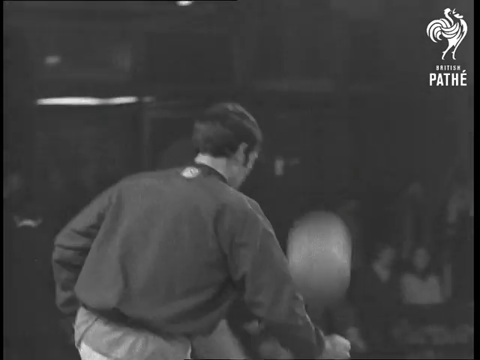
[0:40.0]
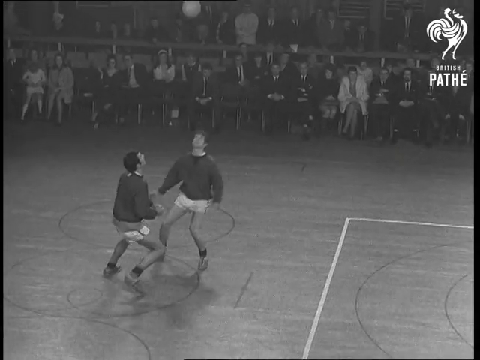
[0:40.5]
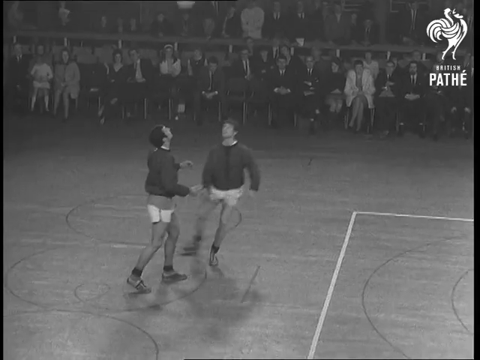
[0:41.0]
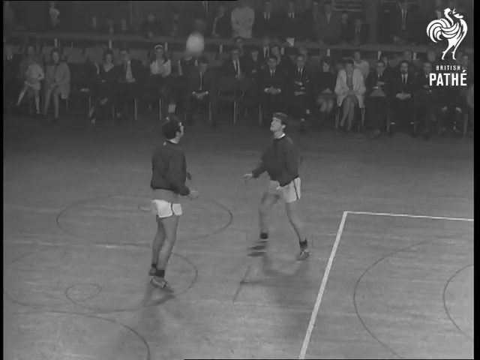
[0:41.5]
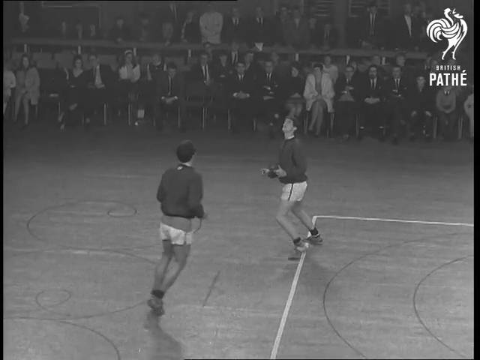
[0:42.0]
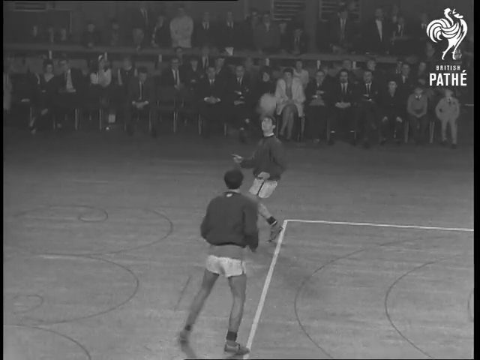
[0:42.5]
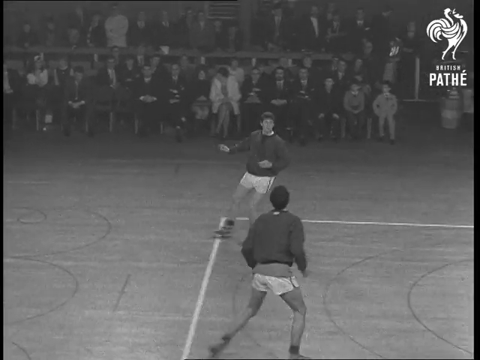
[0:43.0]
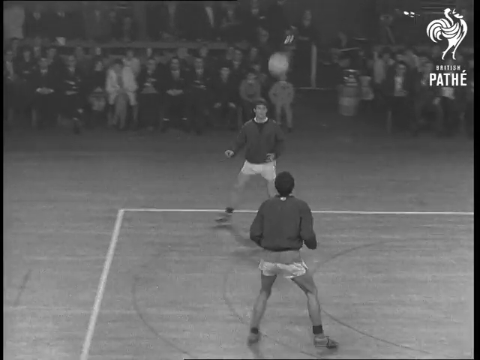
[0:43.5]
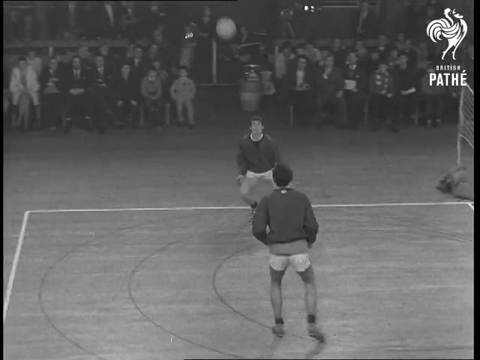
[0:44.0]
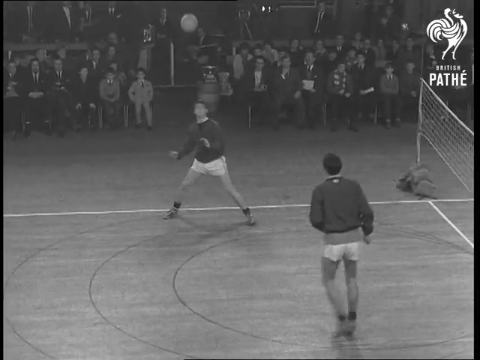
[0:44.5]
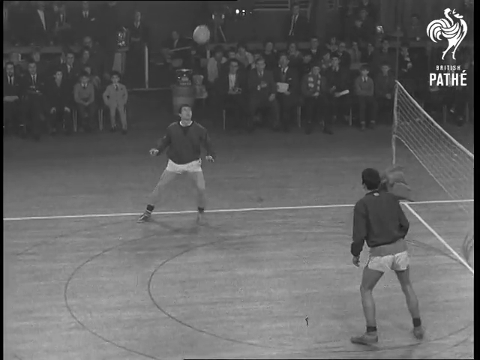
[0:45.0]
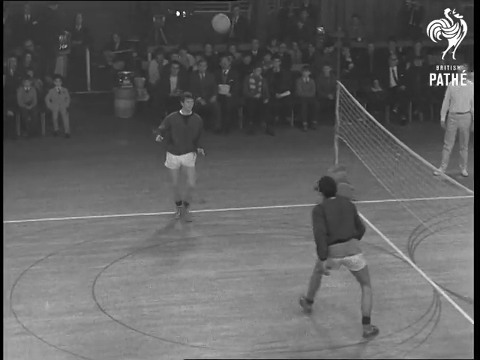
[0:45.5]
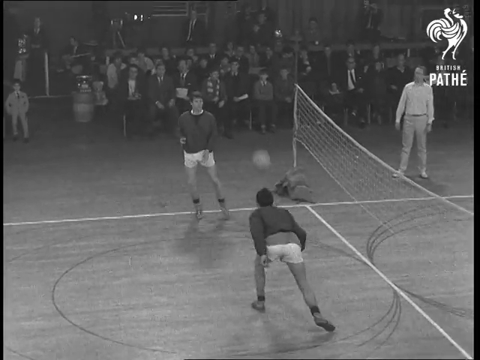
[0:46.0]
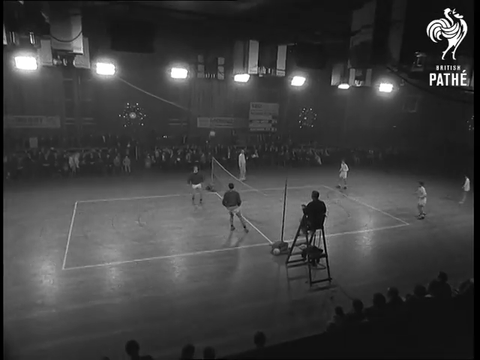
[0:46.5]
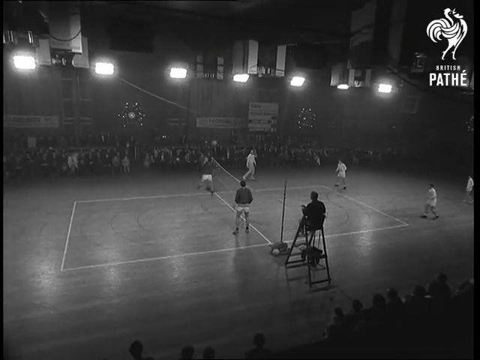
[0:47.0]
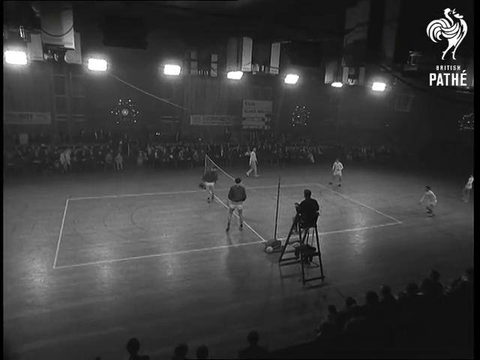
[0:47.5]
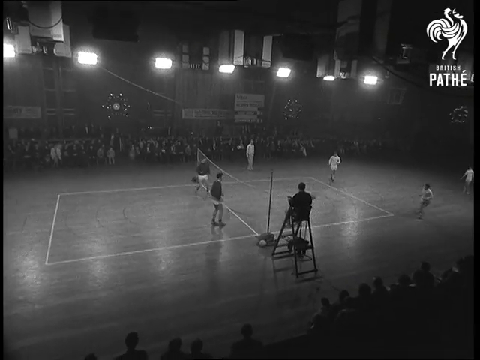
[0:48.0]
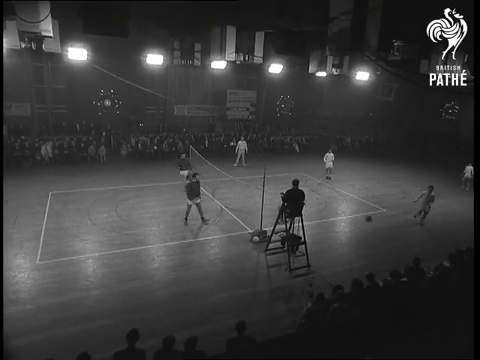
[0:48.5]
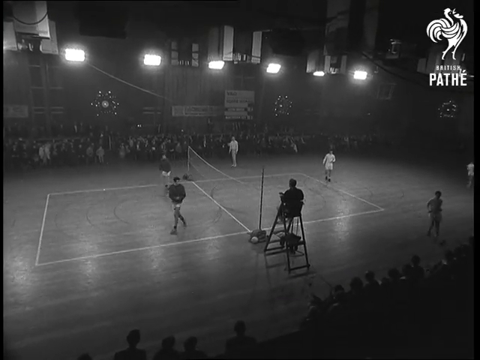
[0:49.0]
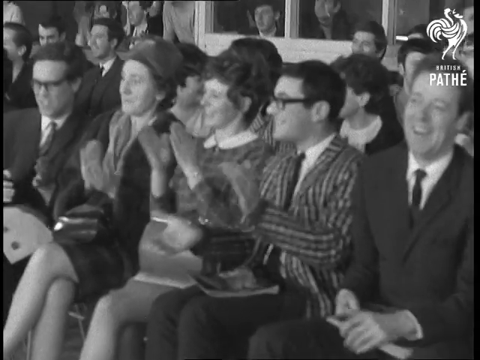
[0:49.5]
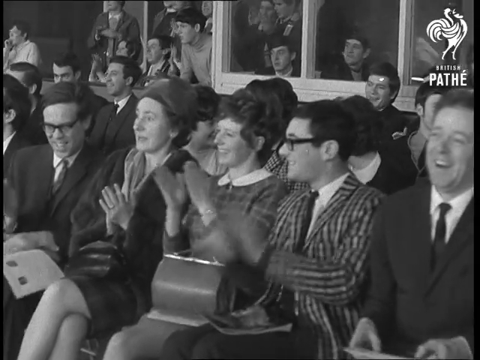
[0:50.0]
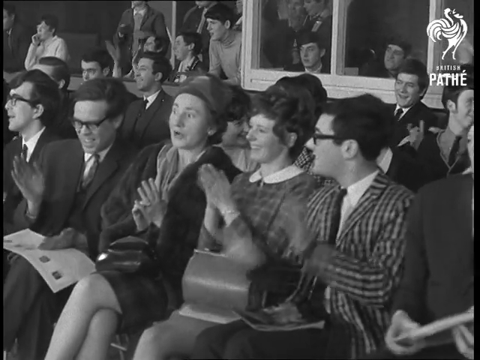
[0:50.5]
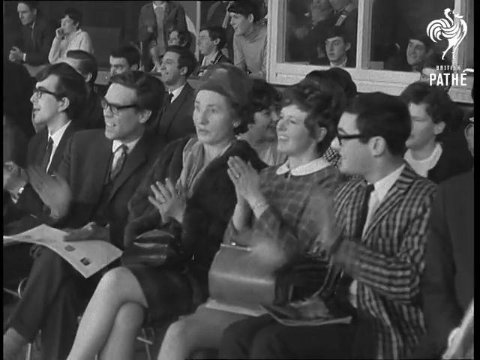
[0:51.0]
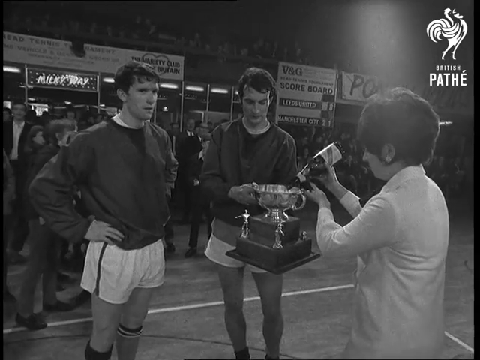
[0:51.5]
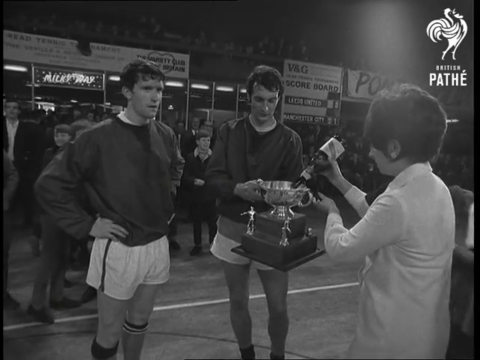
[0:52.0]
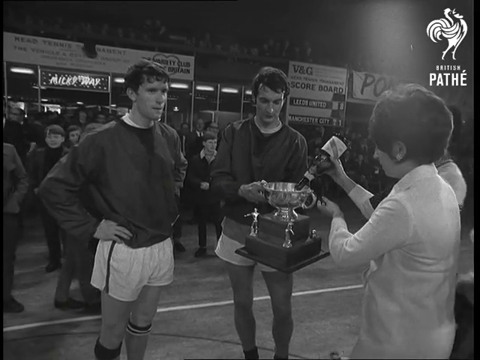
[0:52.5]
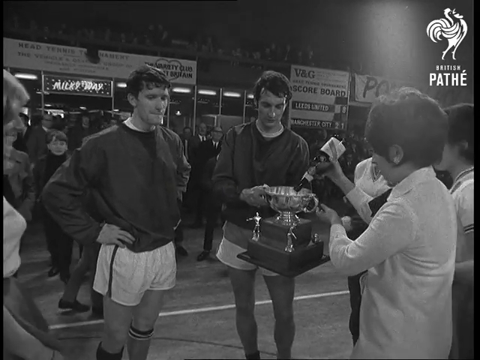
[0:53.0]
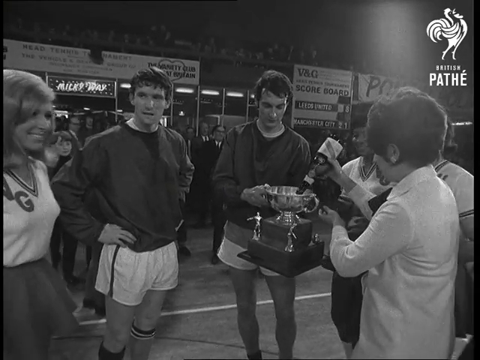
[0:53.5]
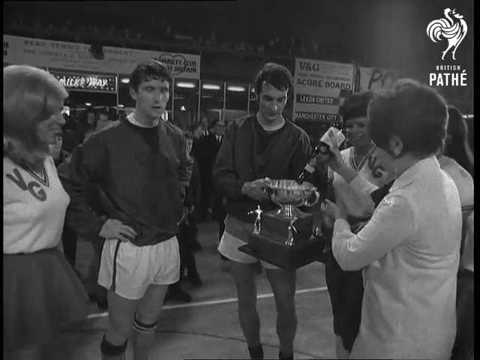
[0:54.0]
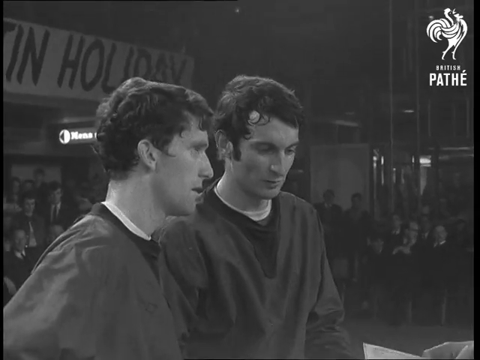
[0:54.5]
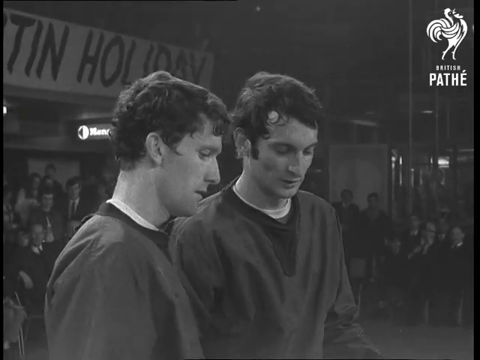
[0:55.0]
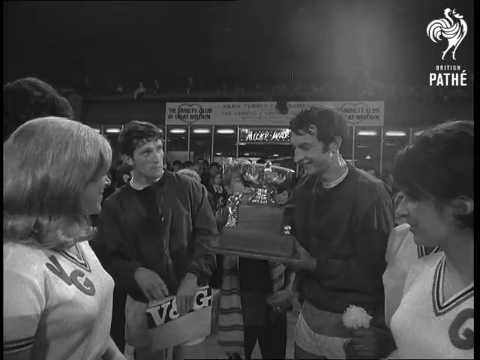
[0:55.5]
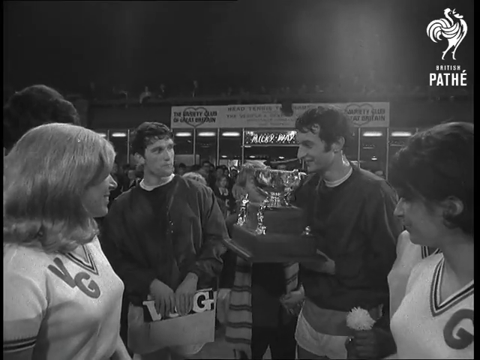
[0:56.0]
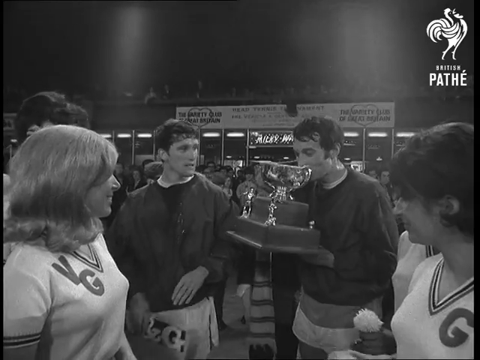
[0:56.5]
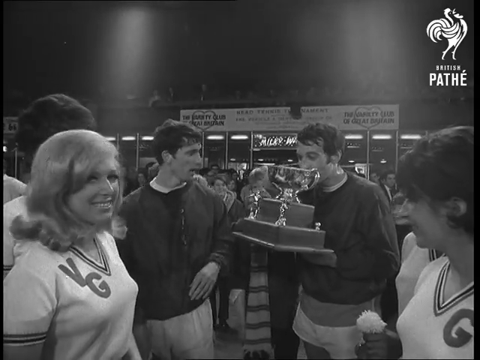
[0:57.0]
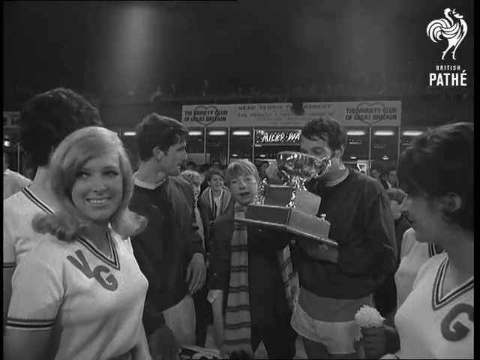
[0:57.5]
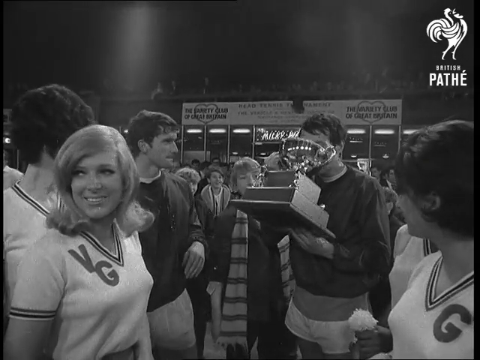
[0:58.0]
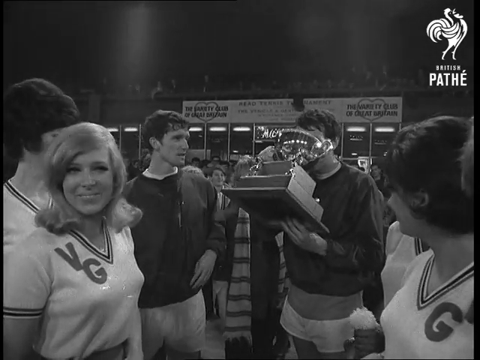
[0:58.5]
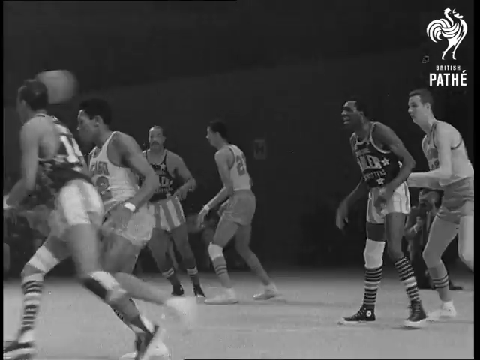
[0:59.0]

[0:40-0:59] A game almost like volleyball is being played in which the ball can only be hit with the teammates' heads. The players bounce it back and forth, then kind of jump up and slam it over. The video cuts to the crowd in the audience, who are clapping, cheering and very happy. A reporter gives two of the men a trophy with something like a large cup on it, and she appears to be pouring champagne or a drink into the cup. The men are wearing dark sweatshirts and white shorts. One of them drinks out of the cup while the other watches his teammate. The game is played kind of in a gymnasium with large circles on the floor, which probably mark different point values in different segments of the court.